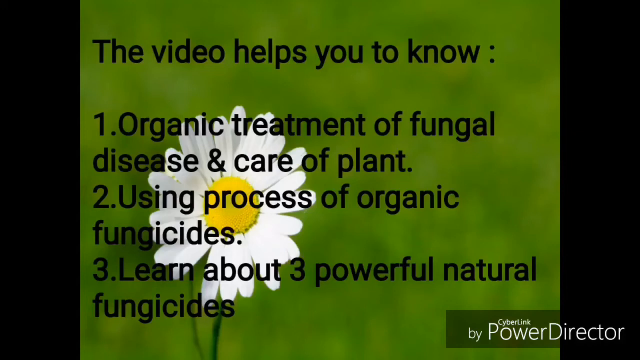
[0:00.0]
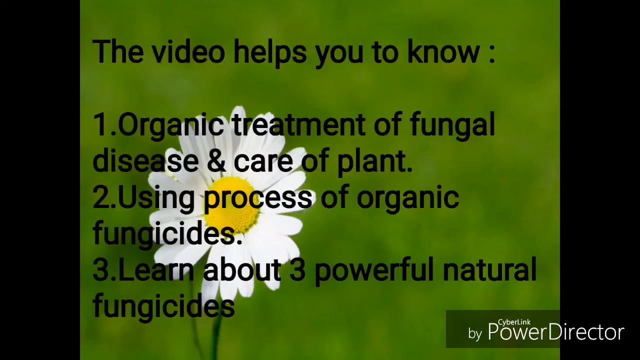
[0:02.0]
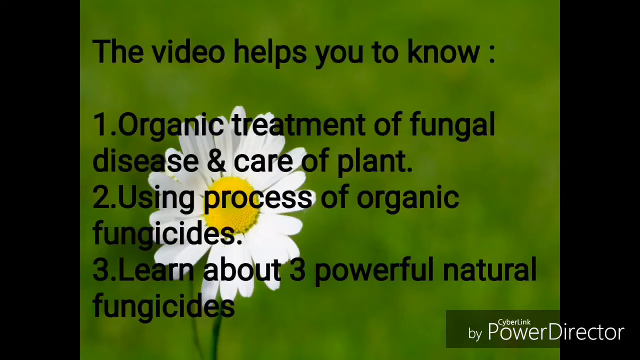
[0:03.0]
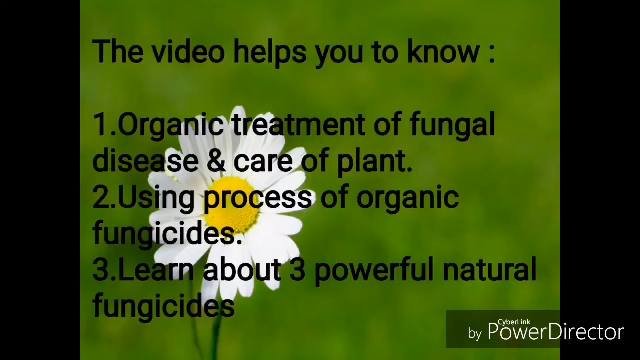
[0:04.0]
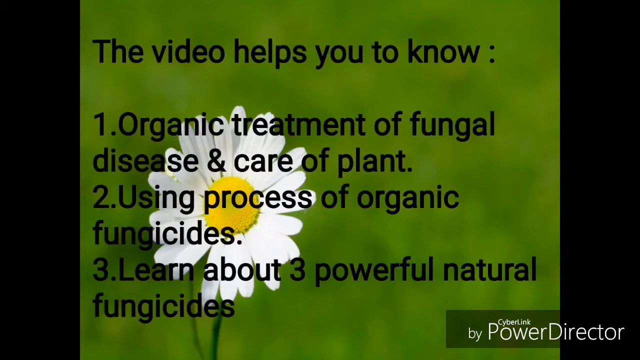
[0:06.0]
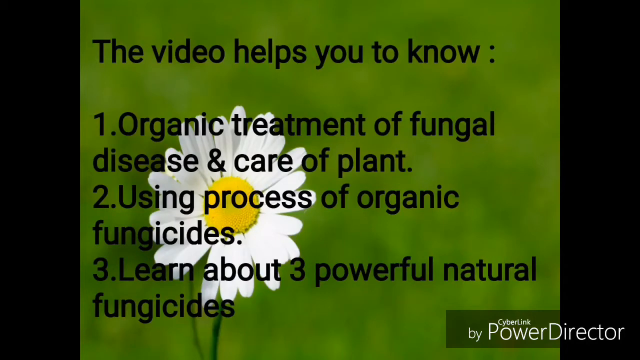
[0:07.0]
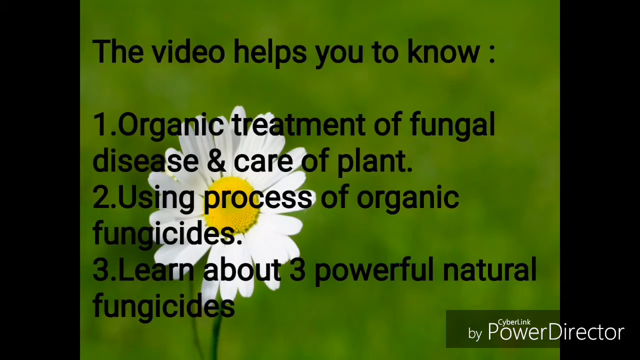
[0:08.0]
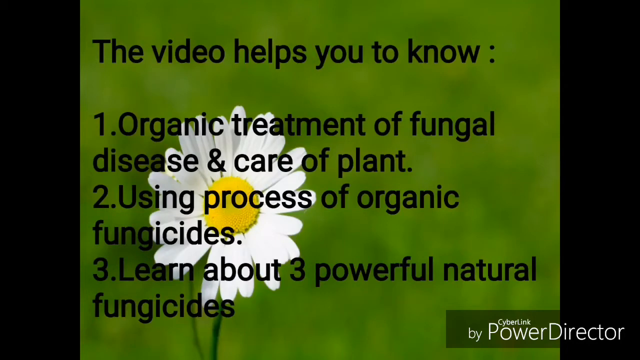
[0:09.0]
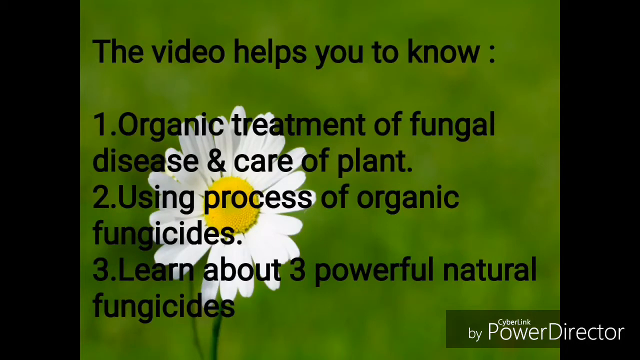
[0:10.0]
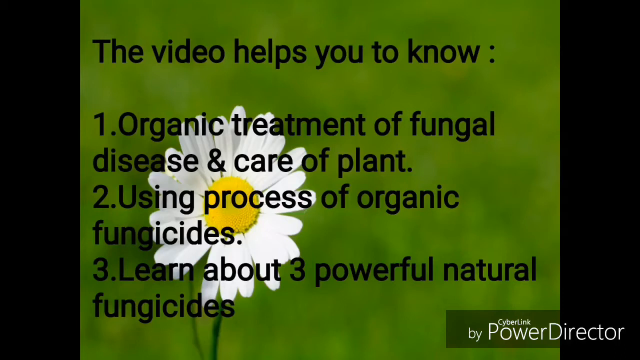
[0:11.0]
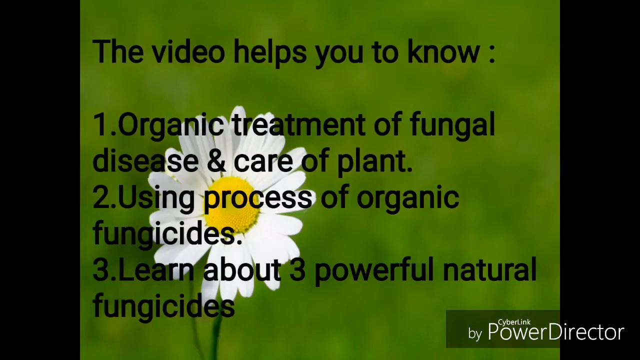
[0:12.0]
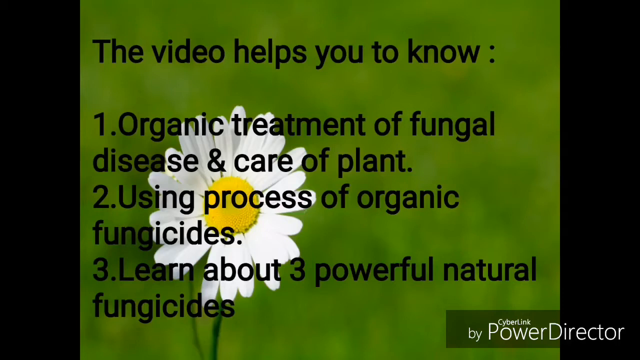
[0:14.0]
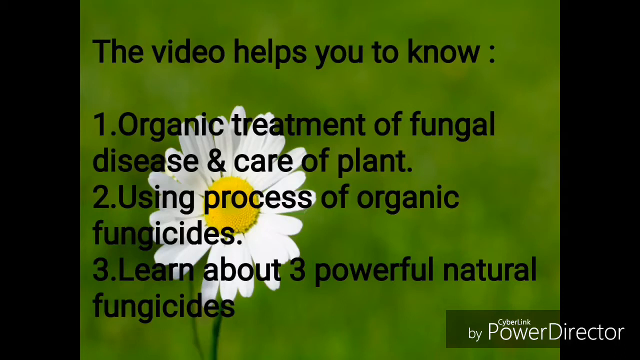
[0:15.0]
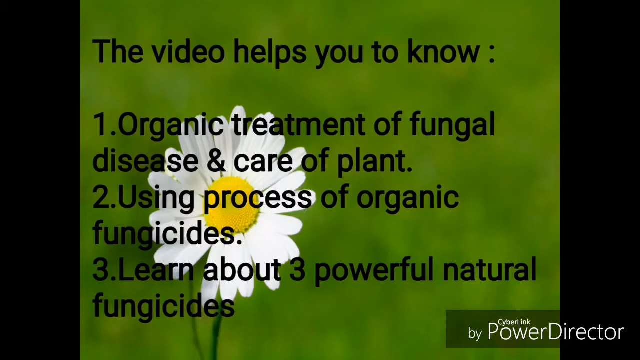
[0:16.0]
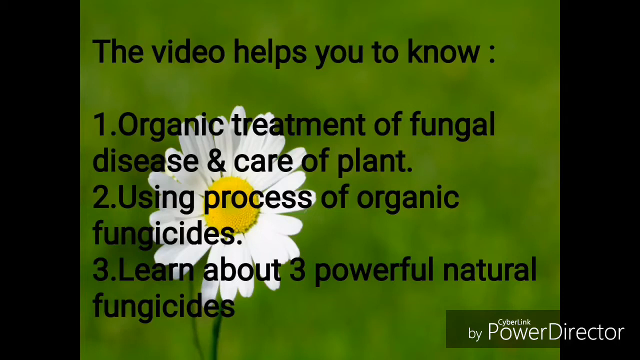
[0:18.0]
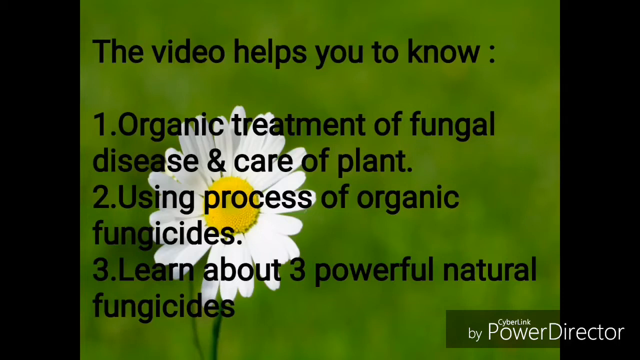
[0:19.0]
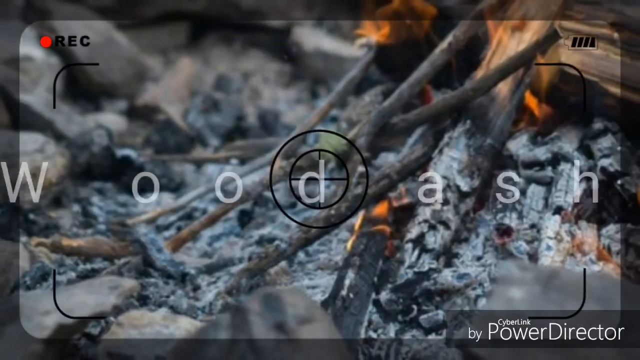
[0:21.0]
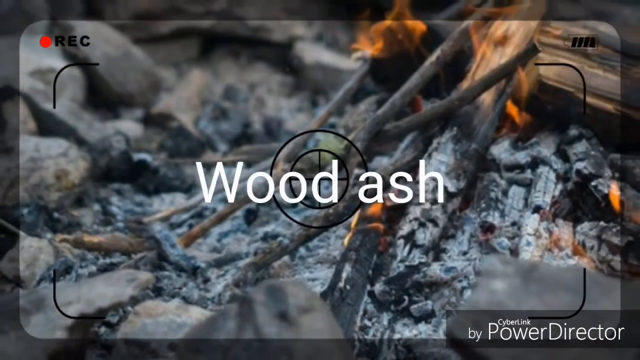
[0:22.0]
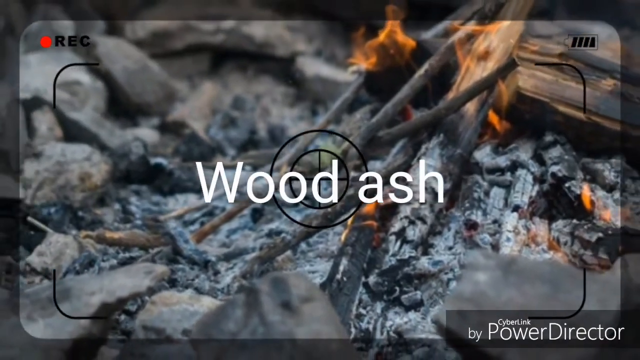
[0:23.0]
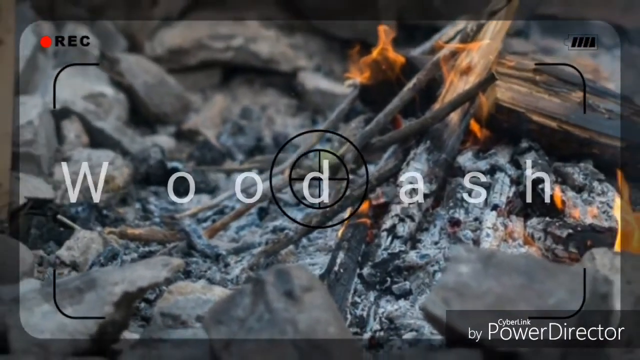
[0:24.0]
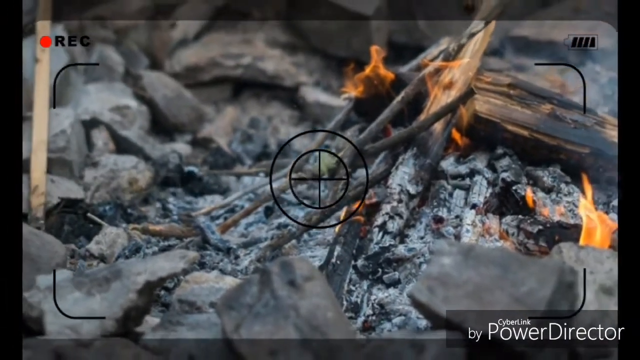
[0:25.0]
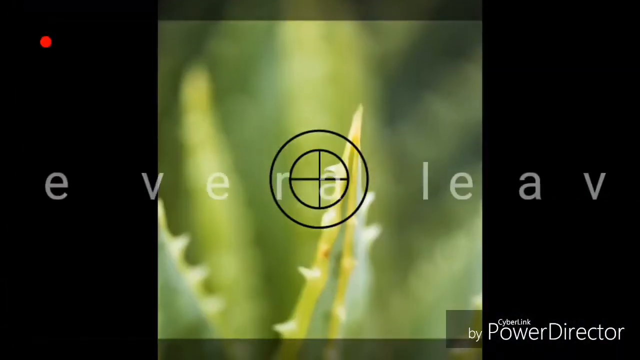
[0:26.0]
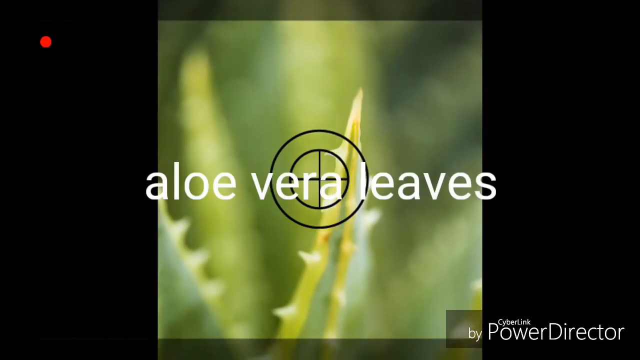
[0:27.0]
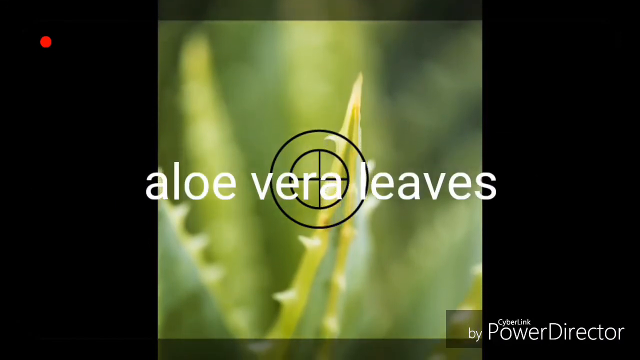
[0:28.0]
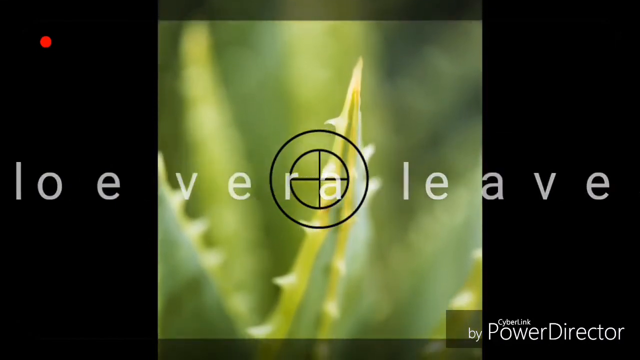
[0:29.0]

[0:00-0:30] The video opens on a black background containing a hazy green area in different shades of green. Text in black, all-lowercase font reads "the video helps you to know", followed by three numbered points: first, "organic treatment of fungal disease"; second, "using process of organic fungicides"; and third, "learn about three powerful natural fungicides". This screen stays for 20 seconds. The view then zooms into a new screen with the words "wood ash" in white font in the centre. A recording follows and zooms out to reveal a fire burning on some sticks with rocks around the edges. A new screen then appears with "aloe vera leaves" written in the centre in white lowercase font, with aloe vera leaves in the background.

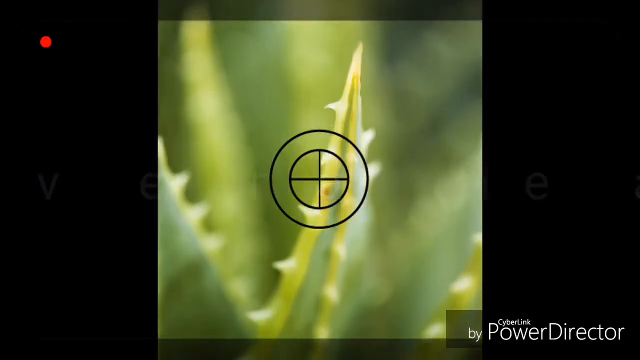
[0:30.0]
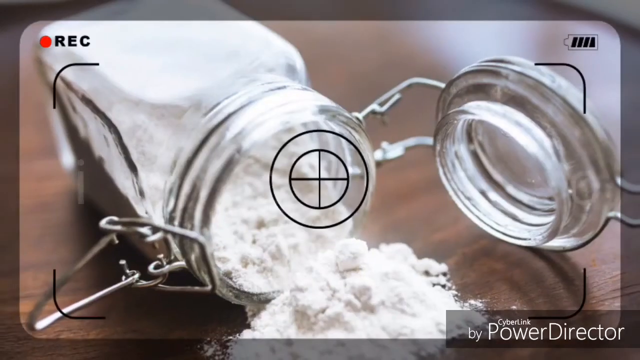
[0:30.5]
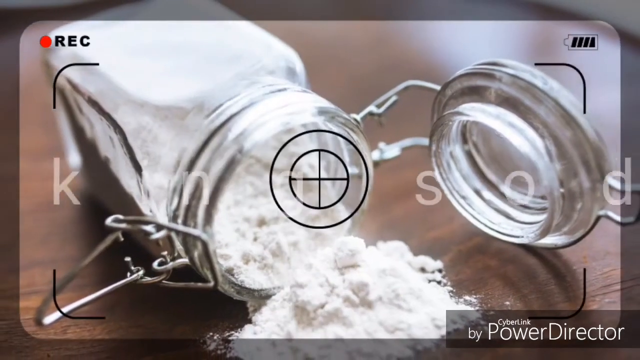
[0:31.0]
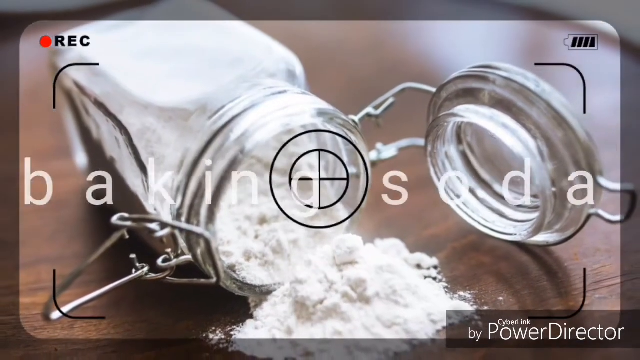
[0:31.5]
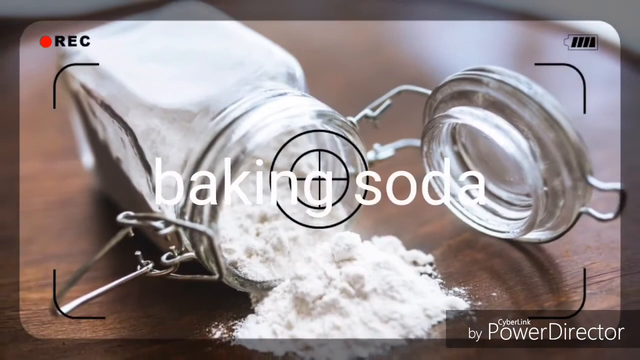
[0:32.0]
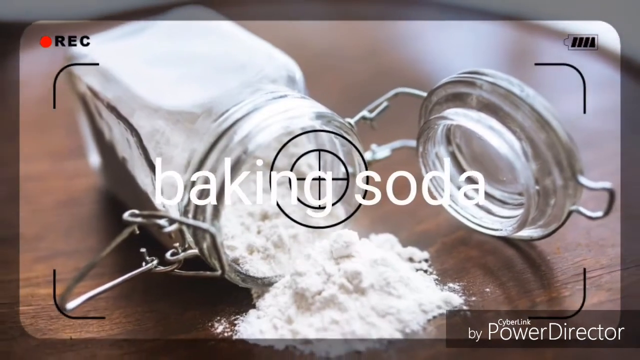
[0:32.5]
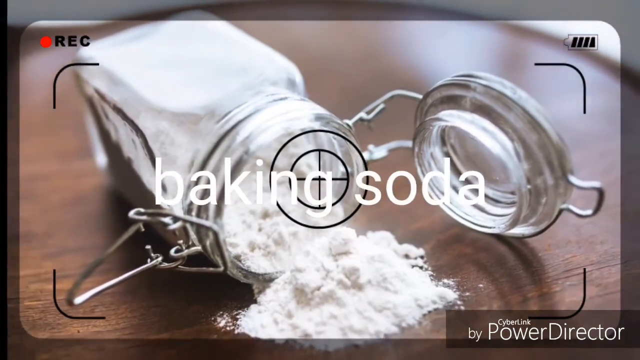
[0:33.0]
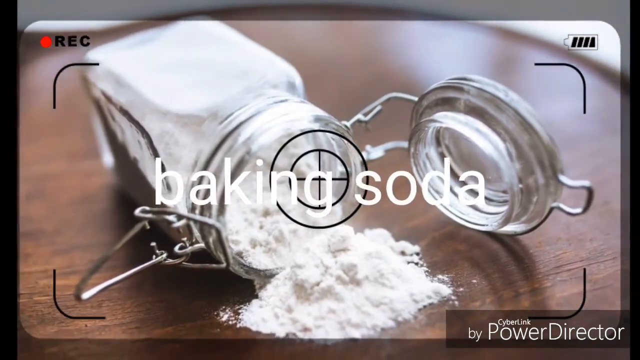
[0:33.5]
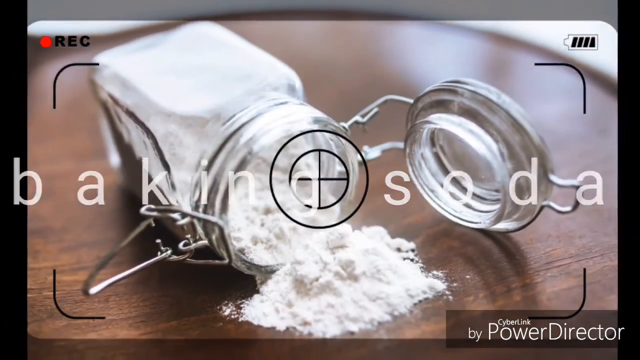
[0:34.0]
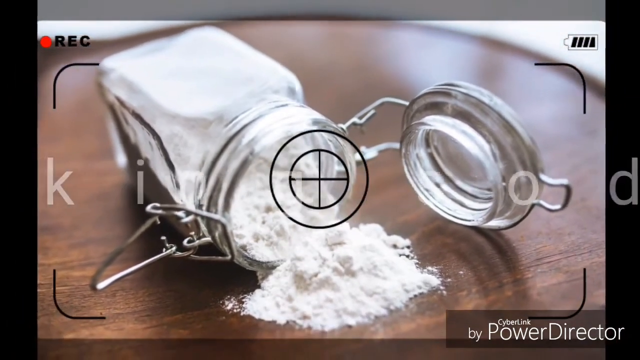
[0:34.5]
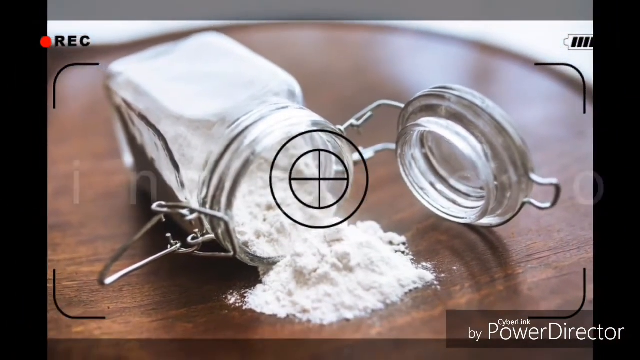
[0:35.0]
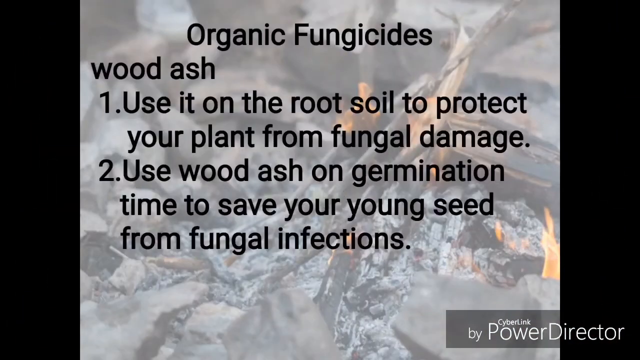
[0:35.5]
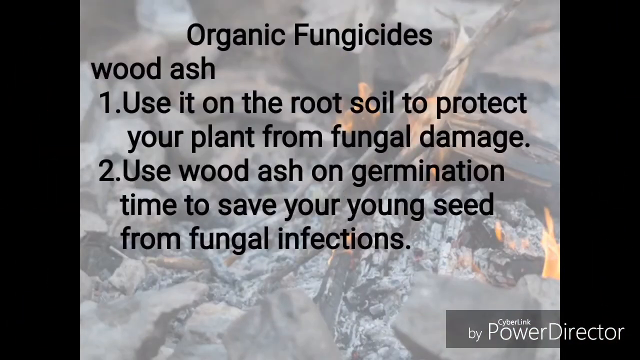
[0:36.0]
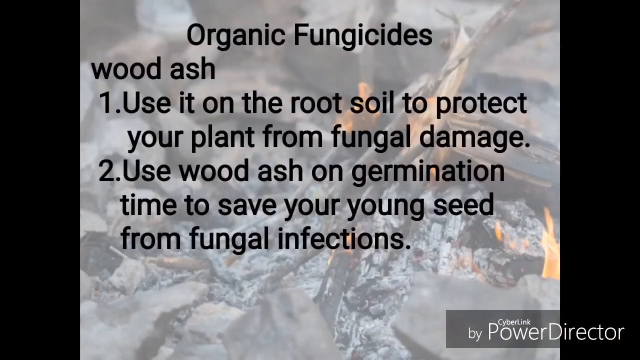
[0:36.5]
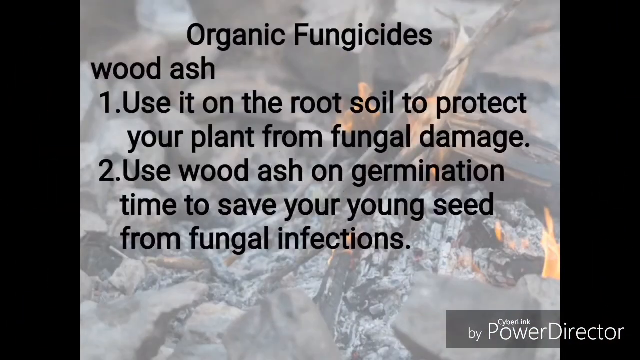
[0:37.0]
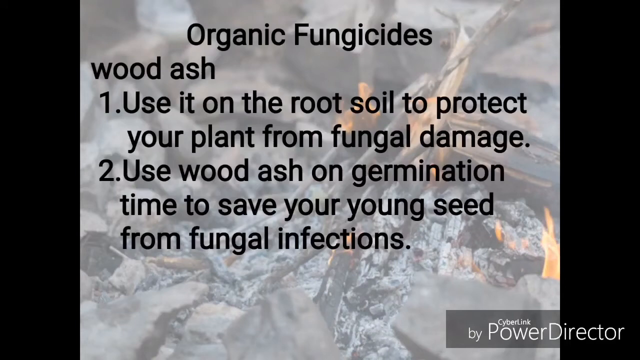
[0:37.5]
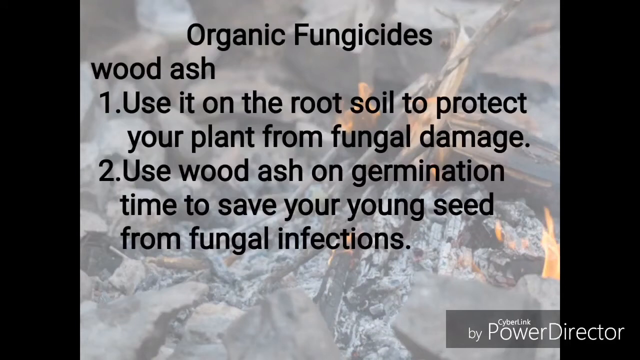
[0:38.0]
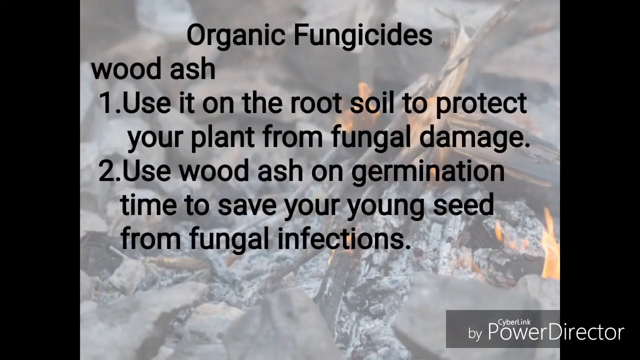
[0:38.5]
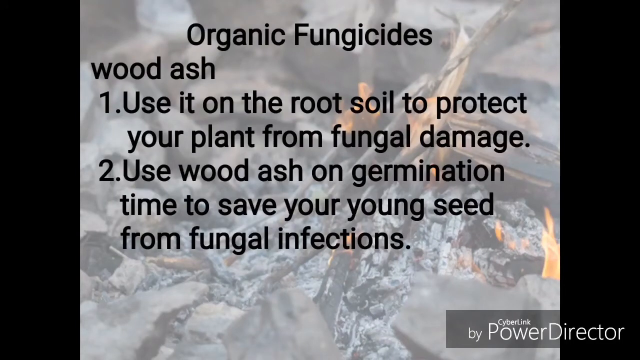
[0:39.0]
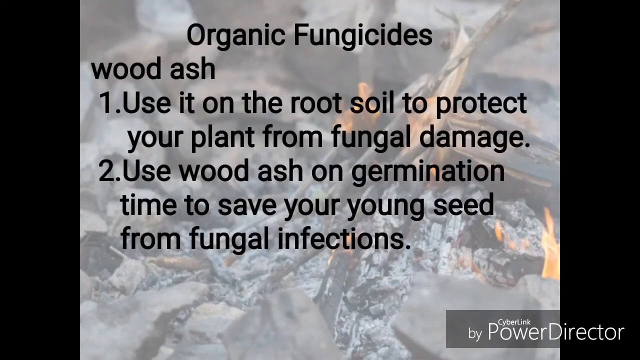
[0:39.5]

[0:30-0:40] Aloe vera leaves are in the background, and a black circle with an inner circle and a cross inside it is in the centre of the screen. The screen changes to a recording of a glass jar knocked over on a table, its lid open and white powder falling out. The words "baking soda" appear in the centre of the screen in white lowercase font, then stretch out to the right and left until they fade away. The screen then changes to the same image of burning sticks with rocks around them, but fainter. Over it is the text "organic fungicides wood ash. 1. use it on the root soil to protect your plant from fungal damage. 2. use wood ash on germination time to save your young seed from fungal infections."